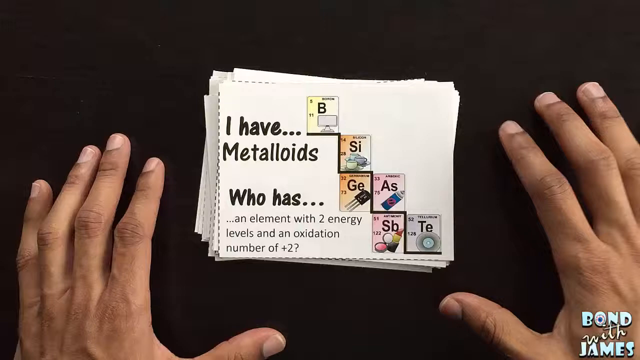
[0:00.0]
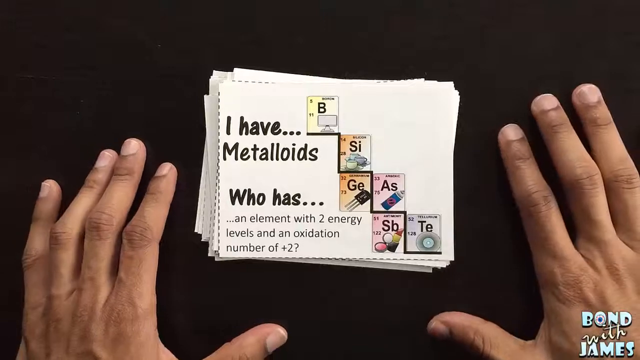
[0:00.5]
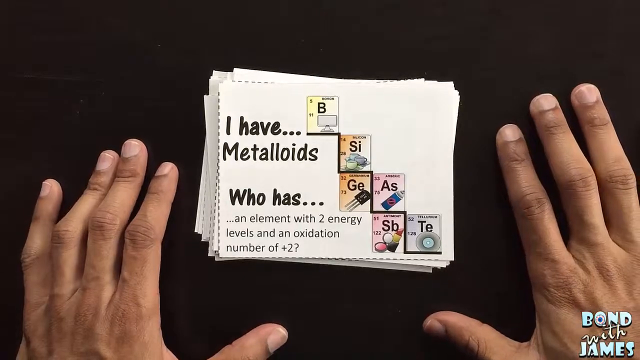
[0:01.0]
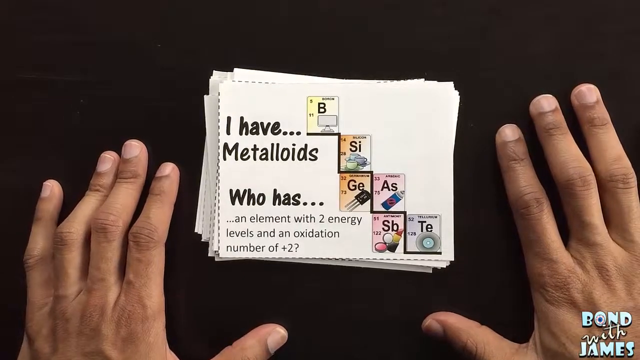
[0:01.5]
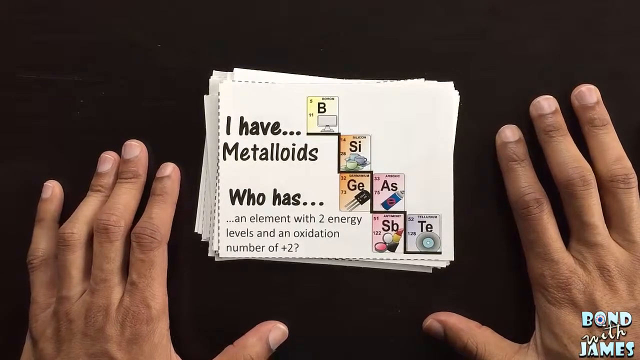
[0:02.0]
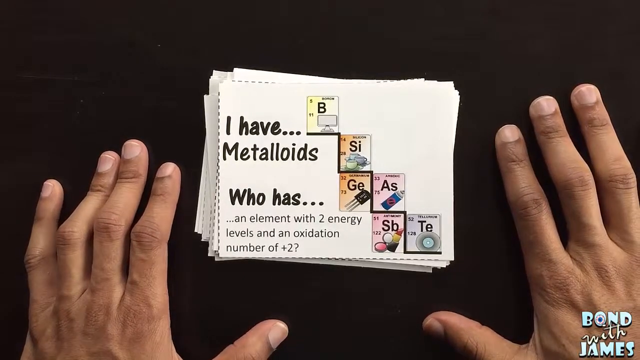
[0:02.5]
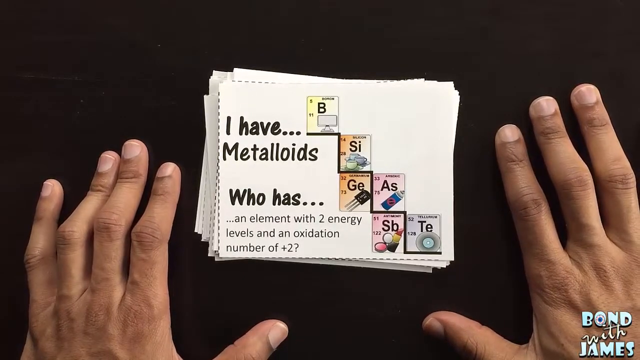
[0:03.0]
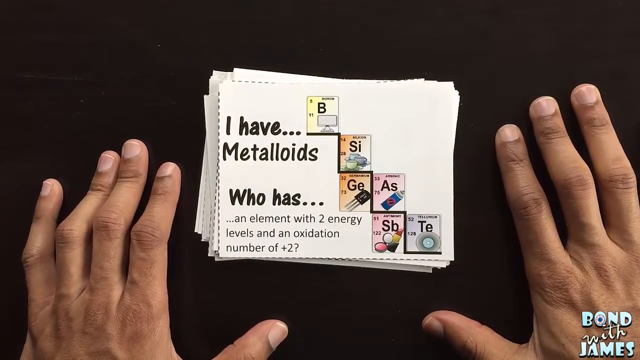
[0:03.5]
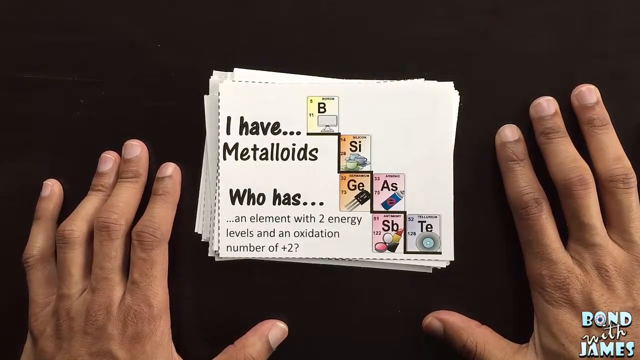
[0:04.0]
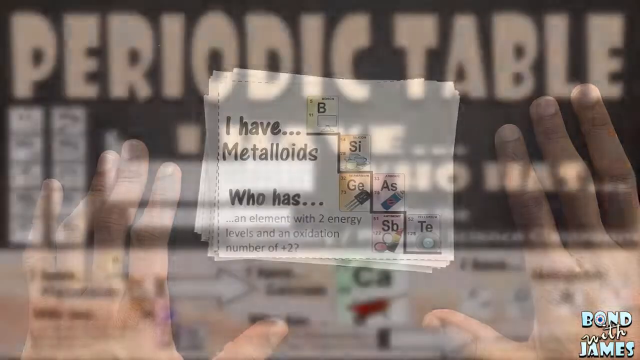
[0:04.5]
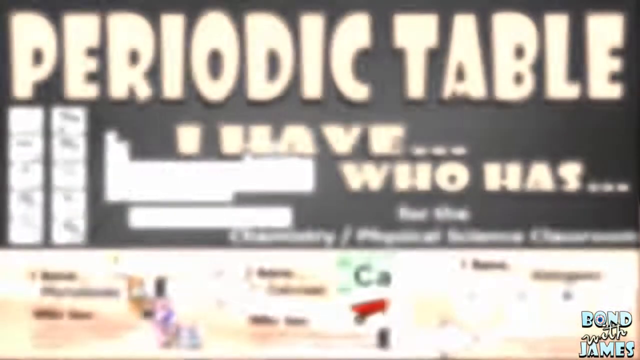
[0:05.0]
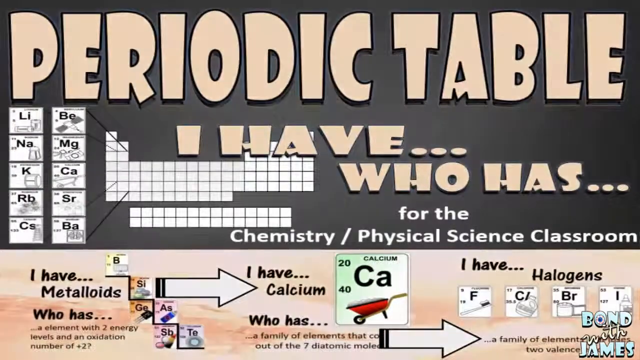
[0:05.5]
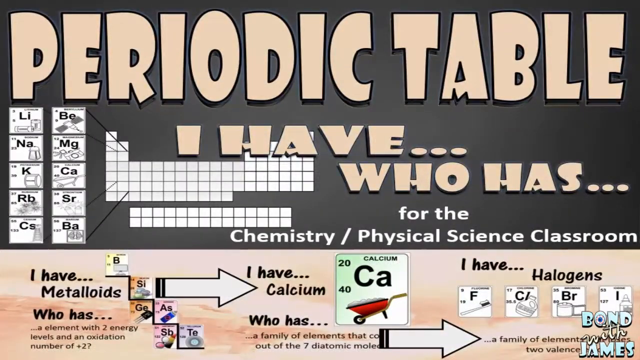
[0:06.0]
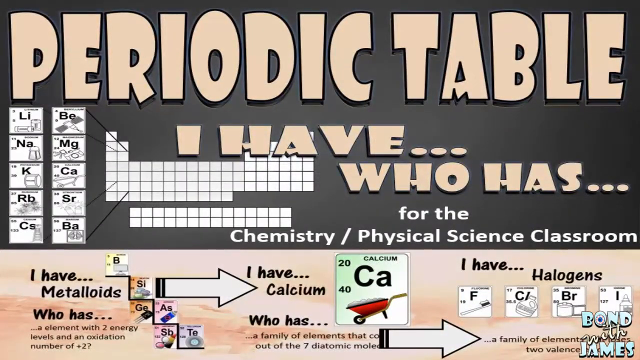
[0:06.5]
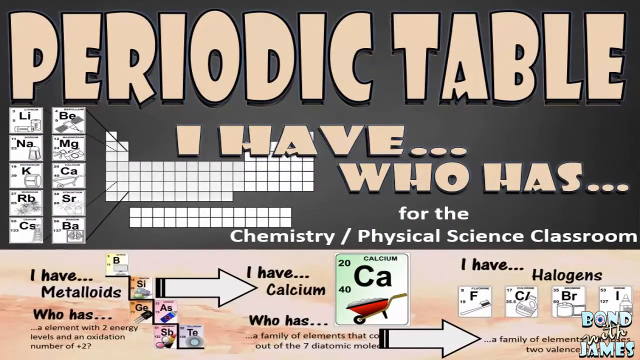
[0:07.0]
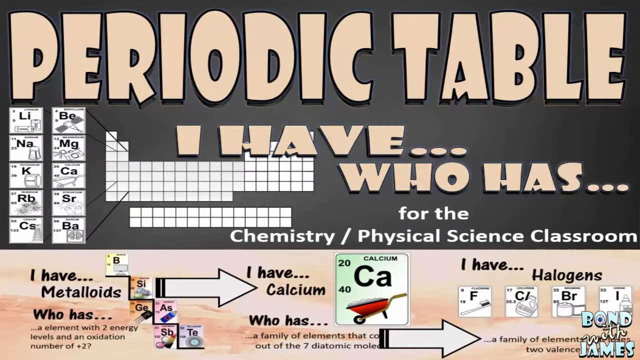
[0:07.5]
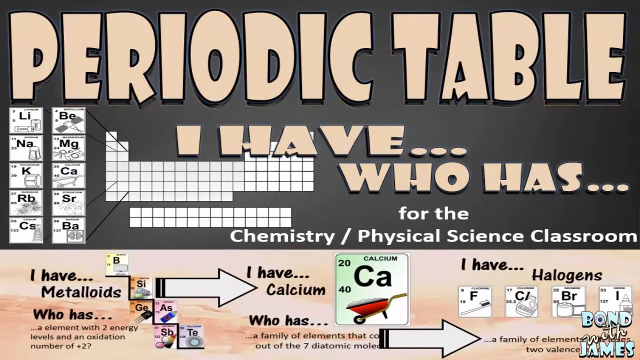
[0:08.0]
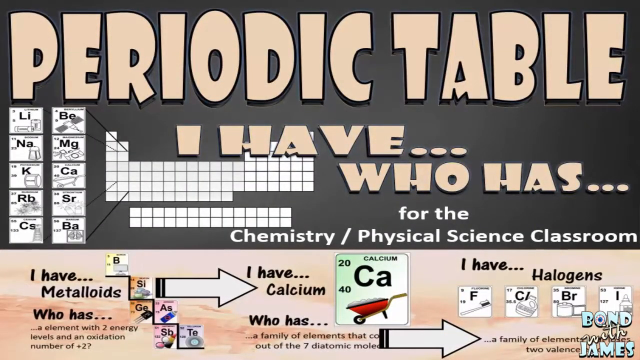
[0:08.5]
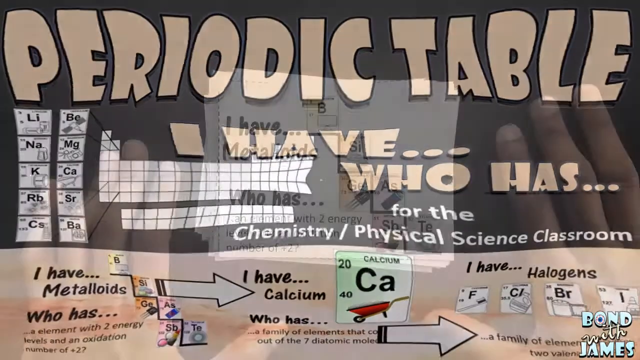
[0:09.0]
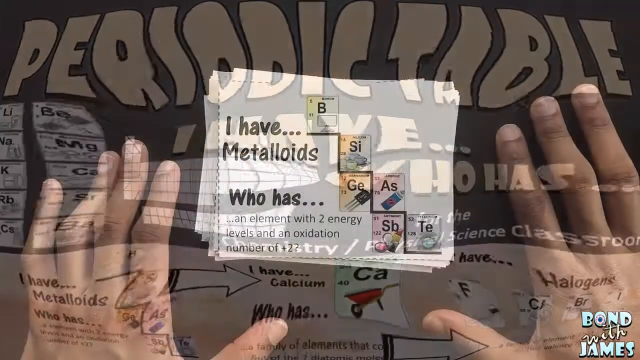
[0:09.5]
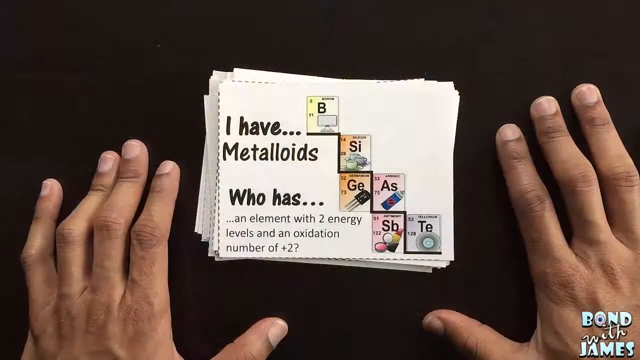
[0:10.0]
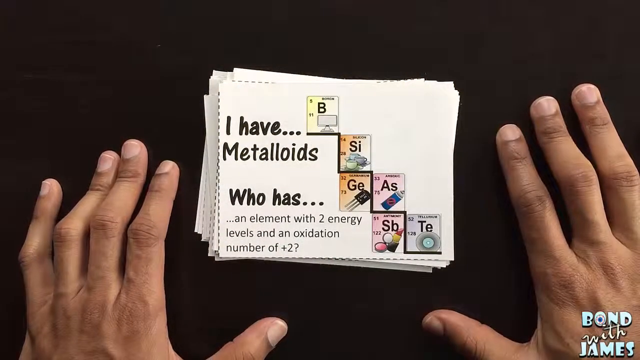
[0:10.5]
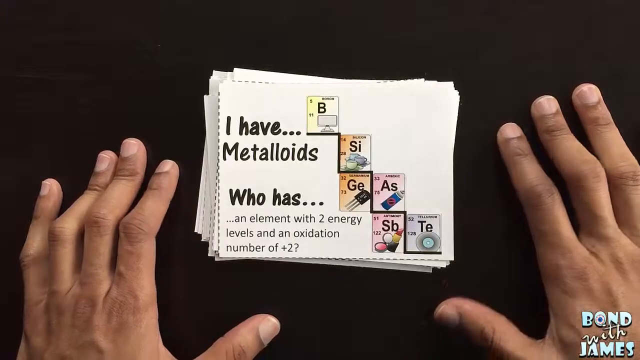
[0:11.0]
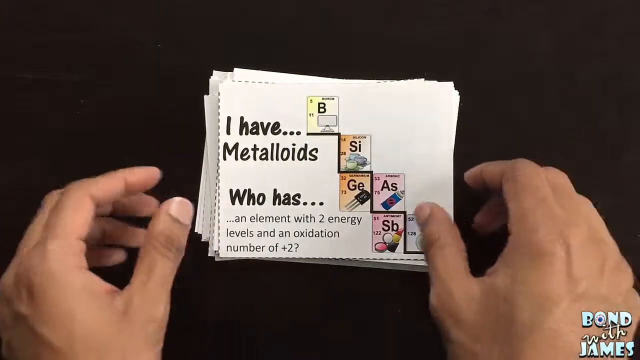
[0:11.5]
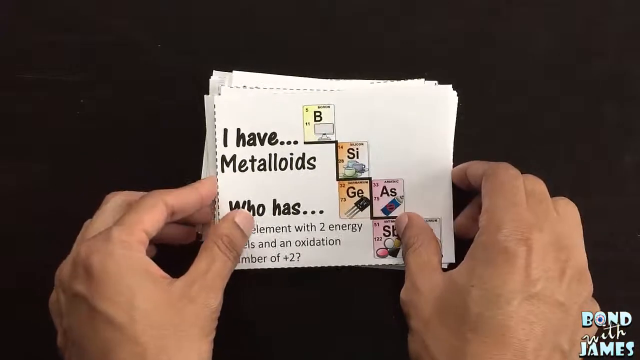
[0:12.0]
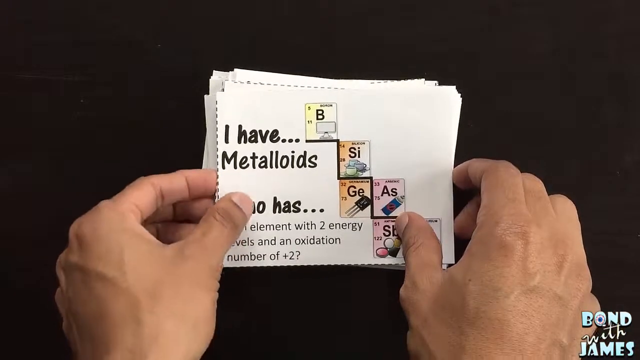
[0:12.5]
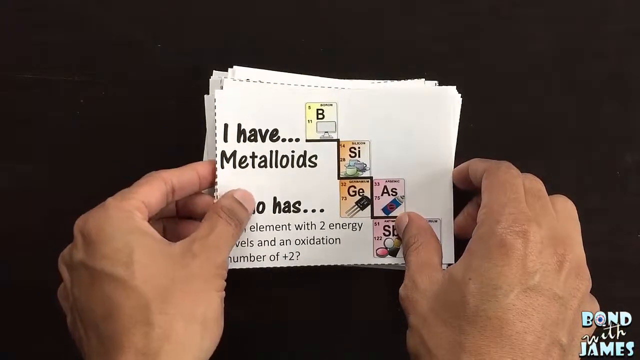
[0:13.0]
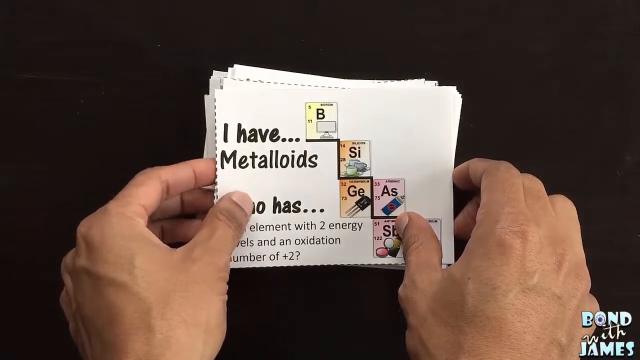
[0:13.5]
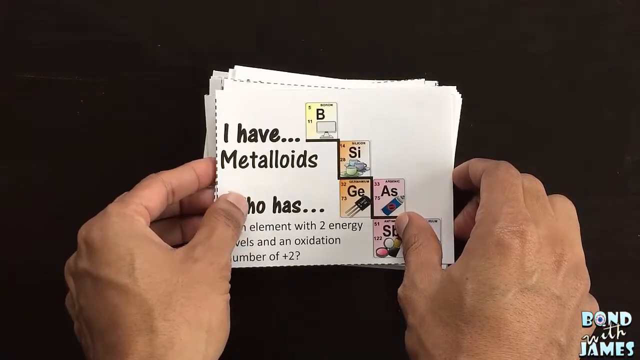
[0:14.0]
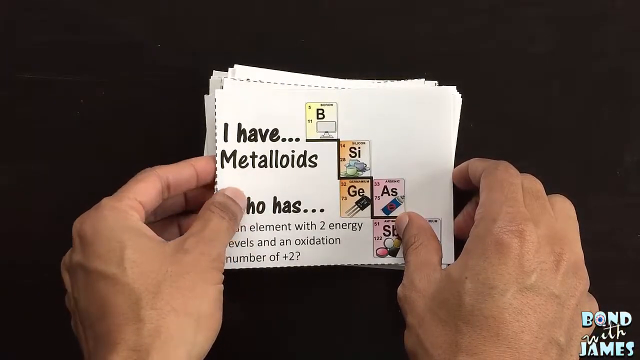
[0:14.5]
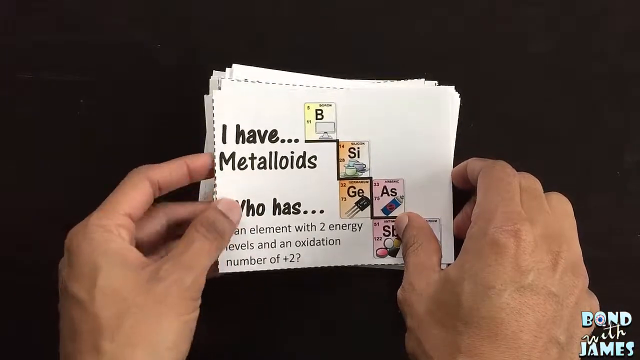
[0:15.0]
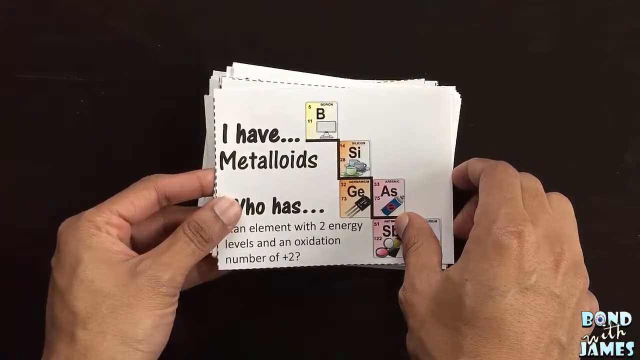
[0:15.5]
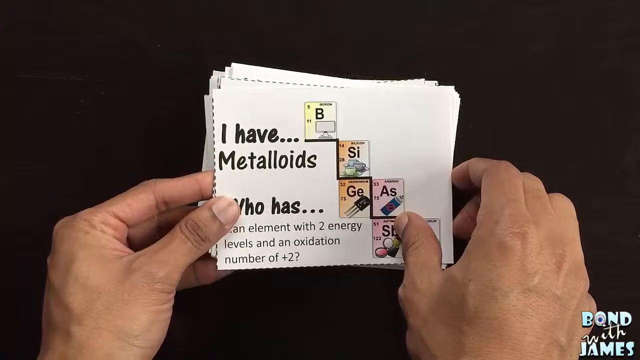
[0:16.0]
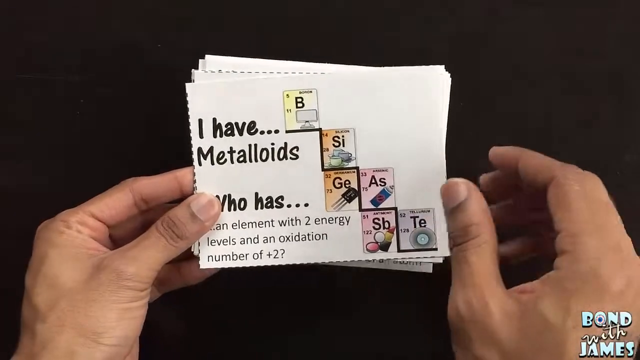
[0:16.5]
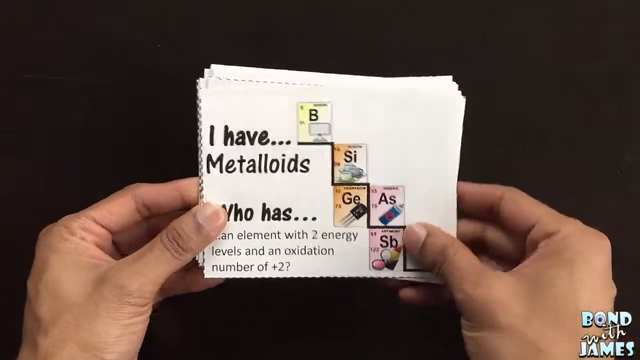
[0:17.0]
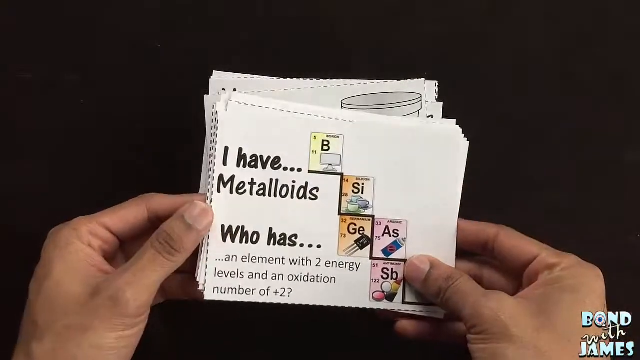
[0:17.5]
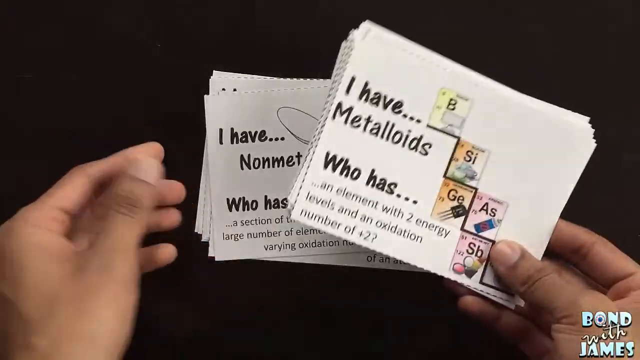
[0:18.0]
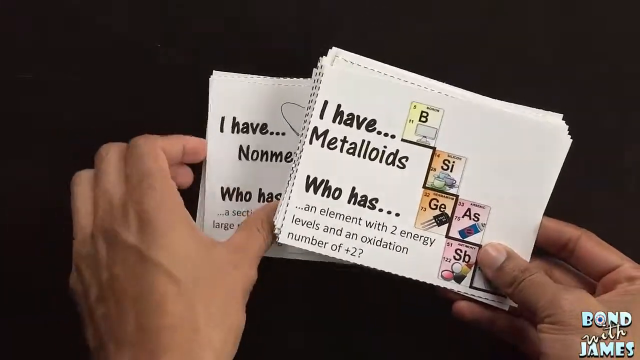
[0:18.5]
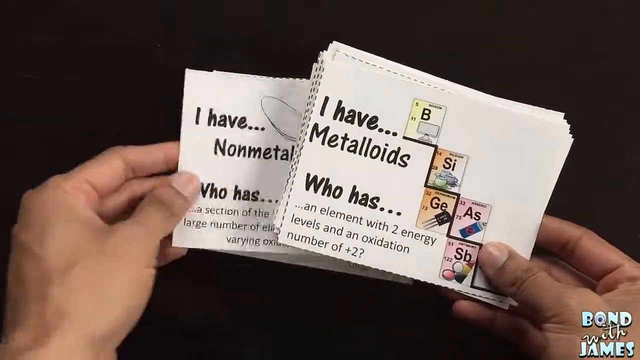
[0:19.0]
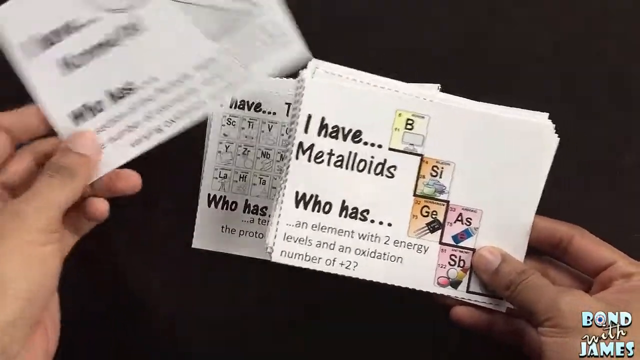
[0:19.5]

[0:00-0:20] Two hands rest on a dark wooden table, with a few stacked rectangular cue cards in the middle. The top card reads "I have metalloids who has an element with two energy levels and an oxidation number of plus two?" on its left side, and on its right side are the periodic elements B, Si, Ge, As, Sb, and Te. The scene changes to a poster titled "Periodic Table" at the top, with text saying it is written for the Chemistry/Physical science classroom. On the left middle of the poster are 10 periodic elements and the text "I have, who has". At the bottom it says "I have metalloids", followed by an arrow to "I have calcium", and on the far right it says "I have halogens".